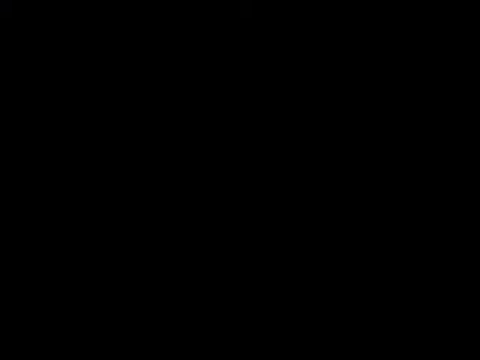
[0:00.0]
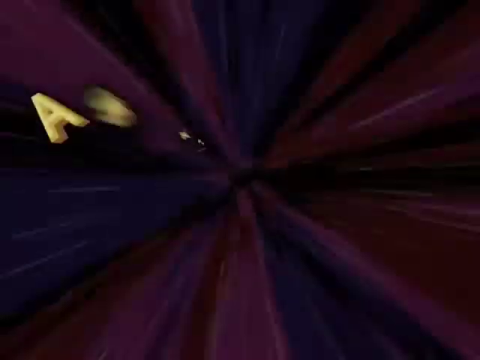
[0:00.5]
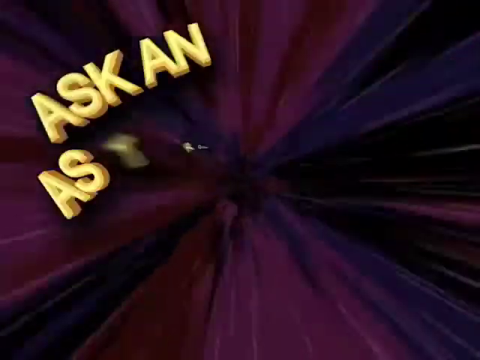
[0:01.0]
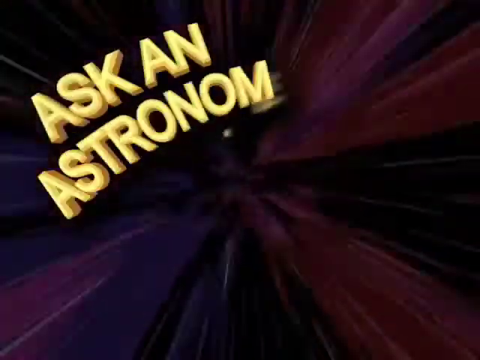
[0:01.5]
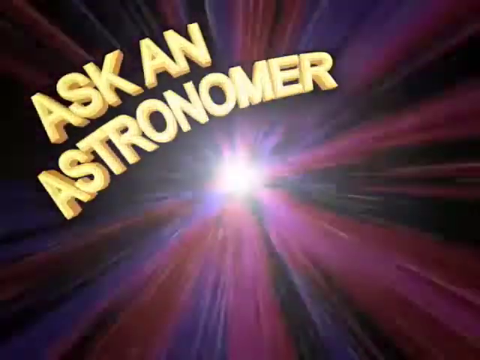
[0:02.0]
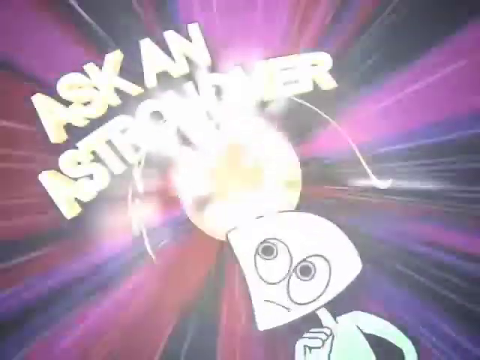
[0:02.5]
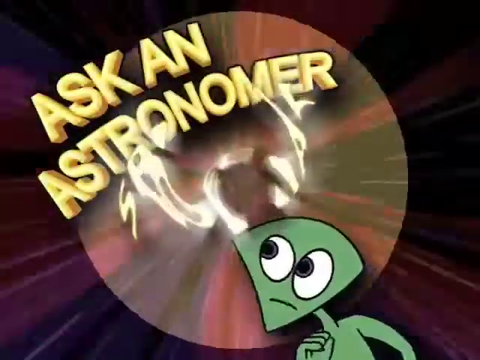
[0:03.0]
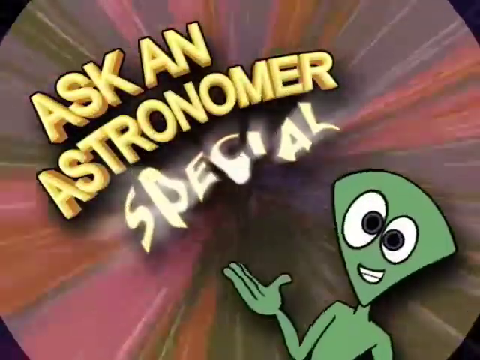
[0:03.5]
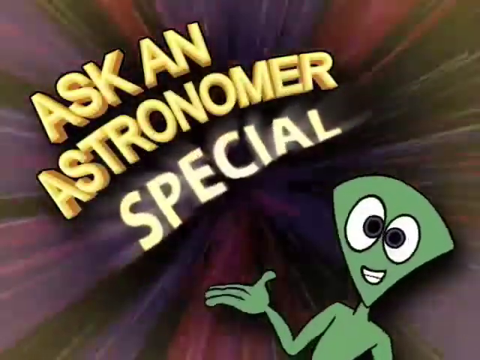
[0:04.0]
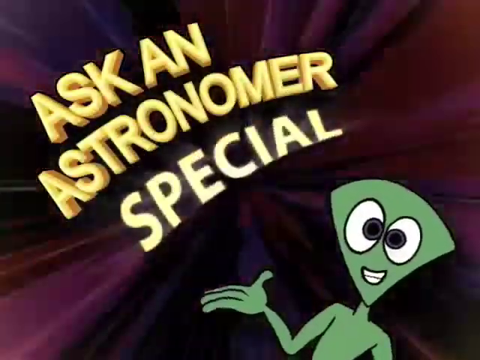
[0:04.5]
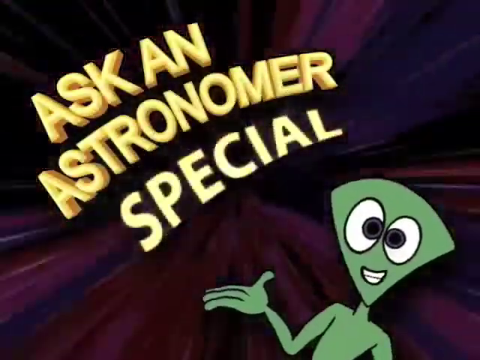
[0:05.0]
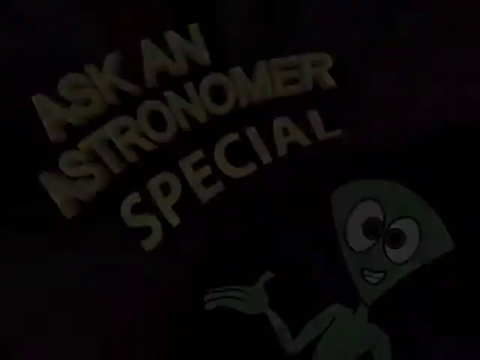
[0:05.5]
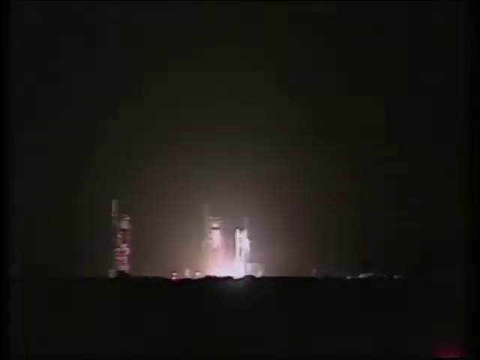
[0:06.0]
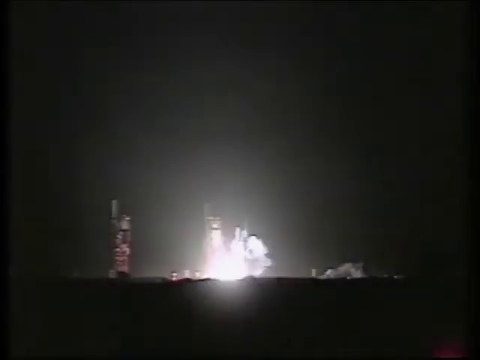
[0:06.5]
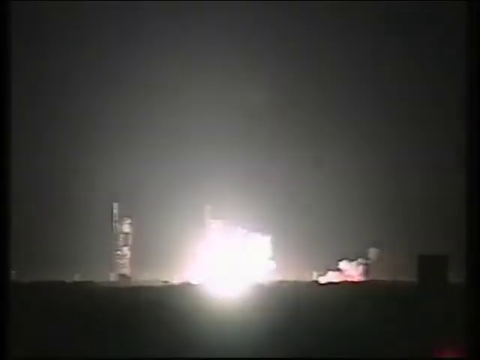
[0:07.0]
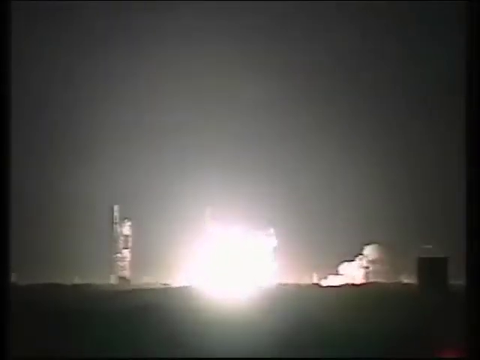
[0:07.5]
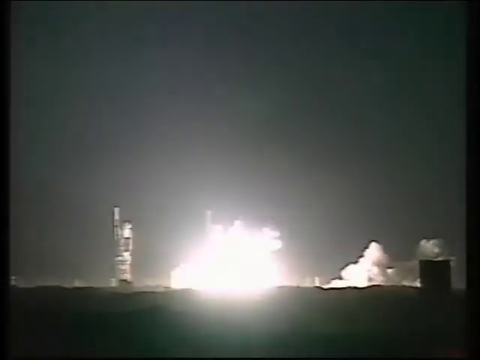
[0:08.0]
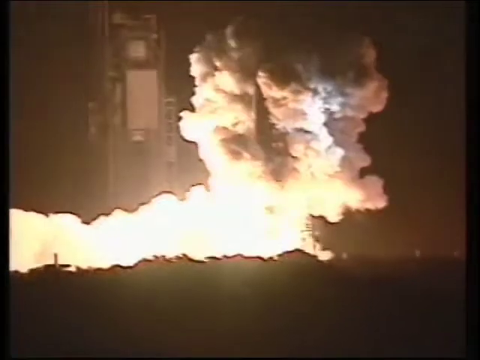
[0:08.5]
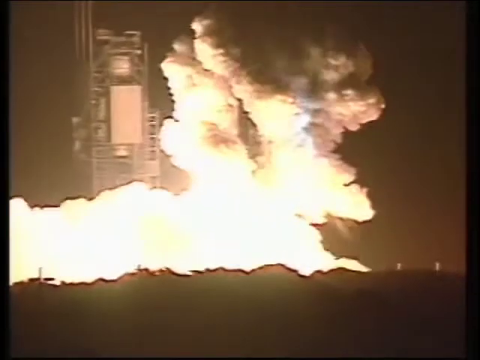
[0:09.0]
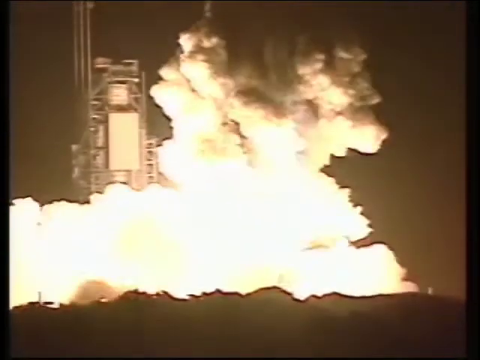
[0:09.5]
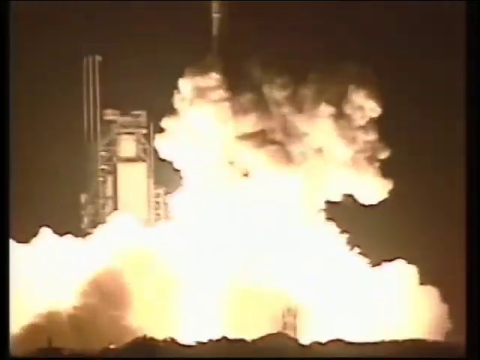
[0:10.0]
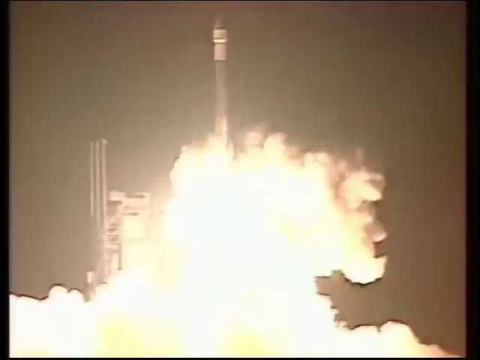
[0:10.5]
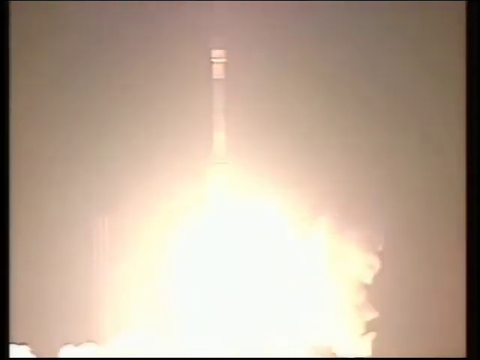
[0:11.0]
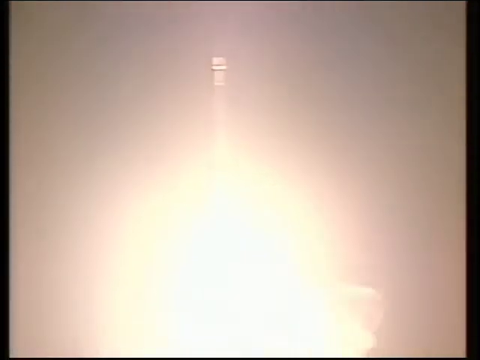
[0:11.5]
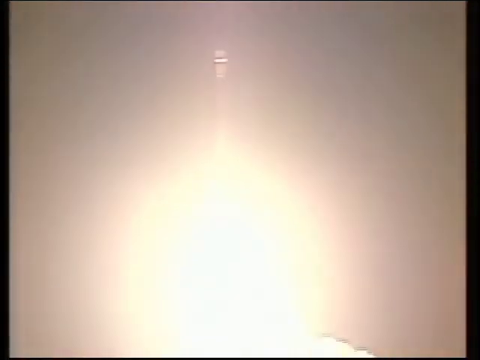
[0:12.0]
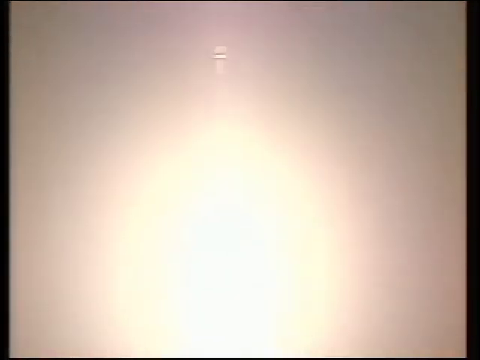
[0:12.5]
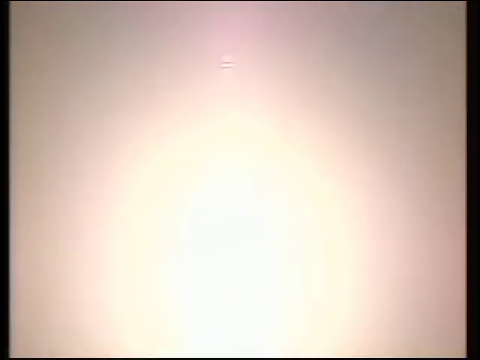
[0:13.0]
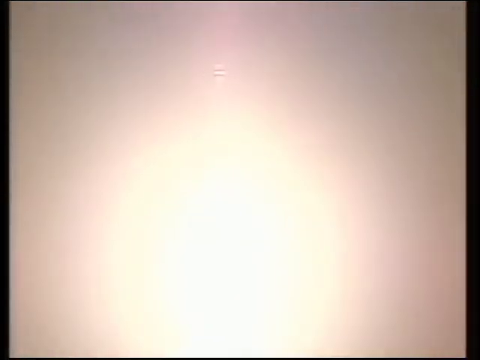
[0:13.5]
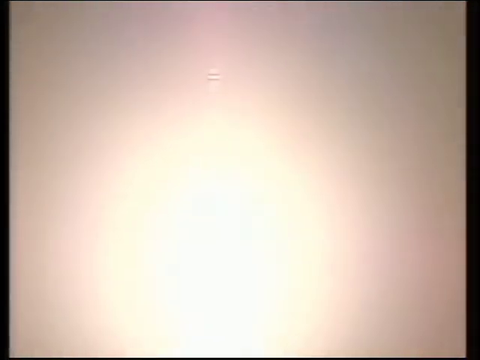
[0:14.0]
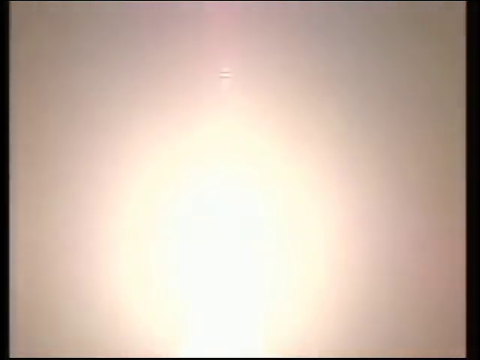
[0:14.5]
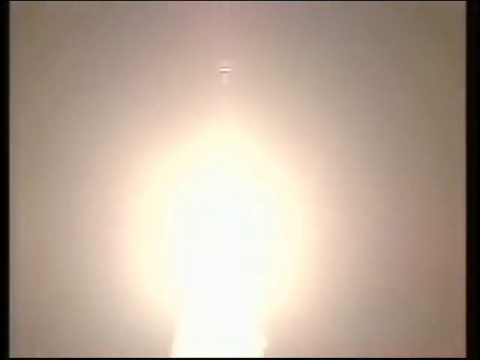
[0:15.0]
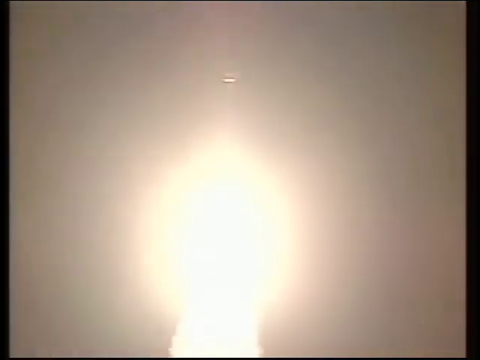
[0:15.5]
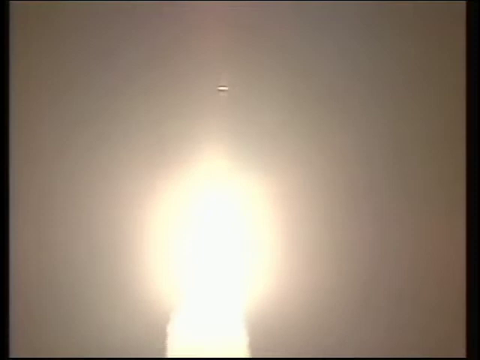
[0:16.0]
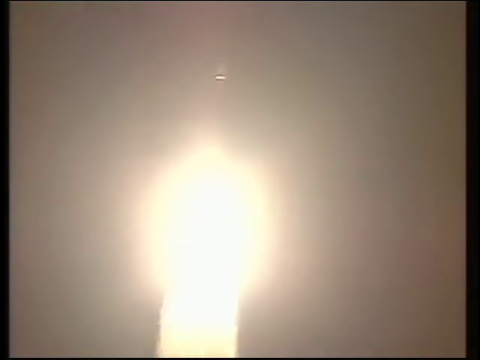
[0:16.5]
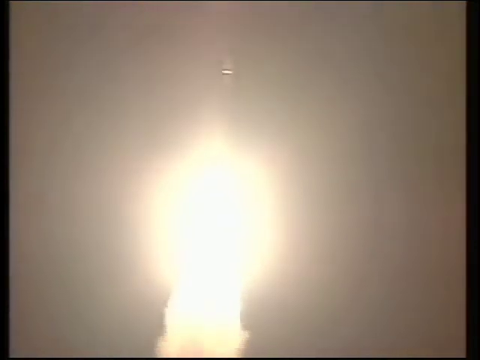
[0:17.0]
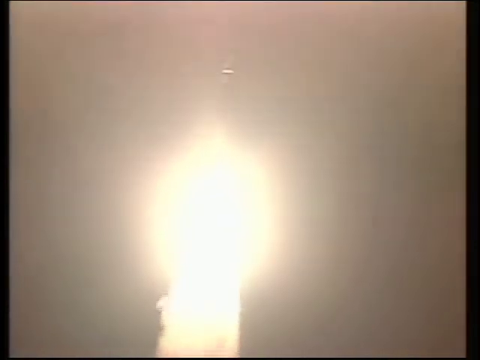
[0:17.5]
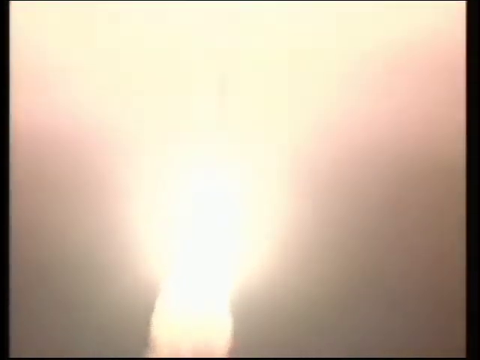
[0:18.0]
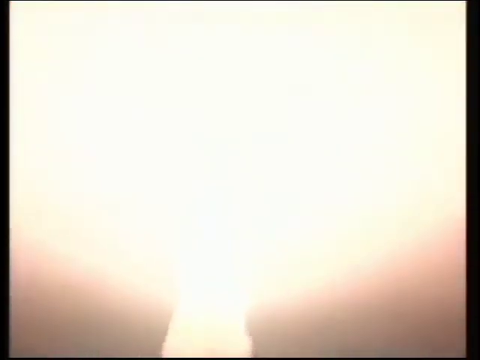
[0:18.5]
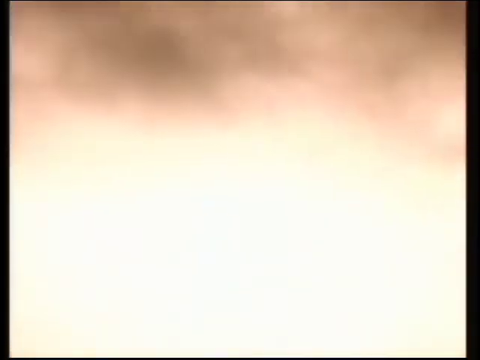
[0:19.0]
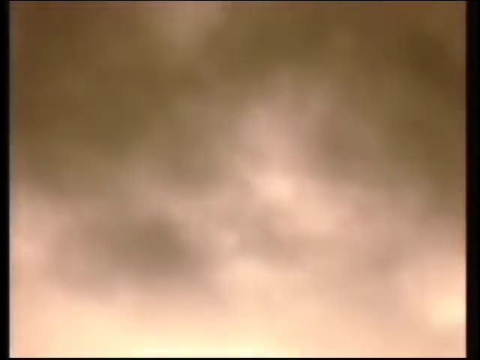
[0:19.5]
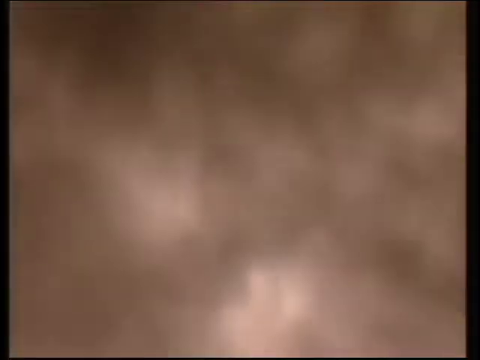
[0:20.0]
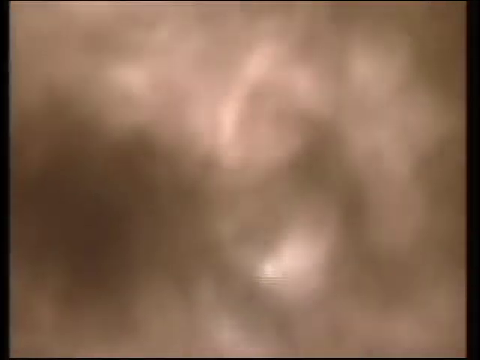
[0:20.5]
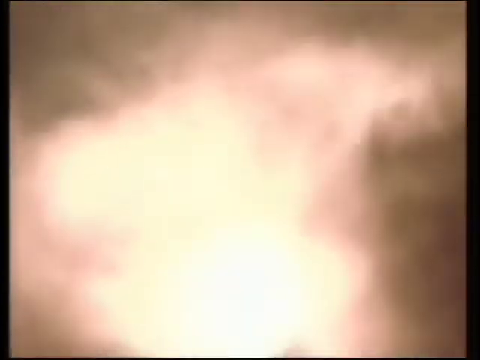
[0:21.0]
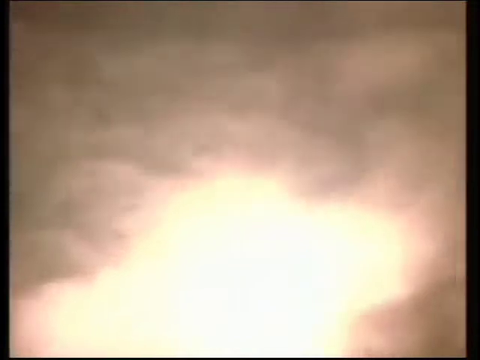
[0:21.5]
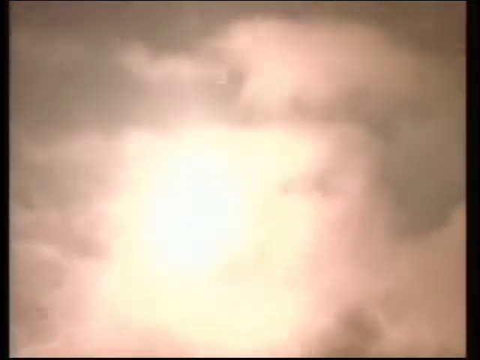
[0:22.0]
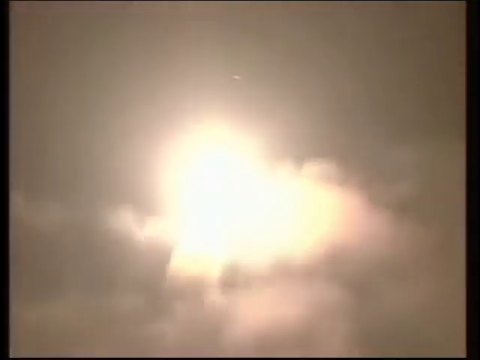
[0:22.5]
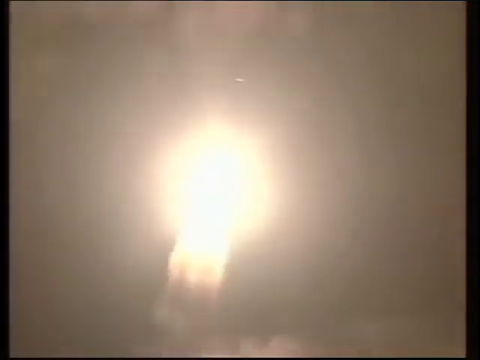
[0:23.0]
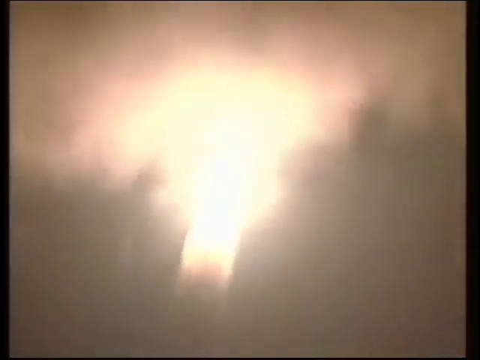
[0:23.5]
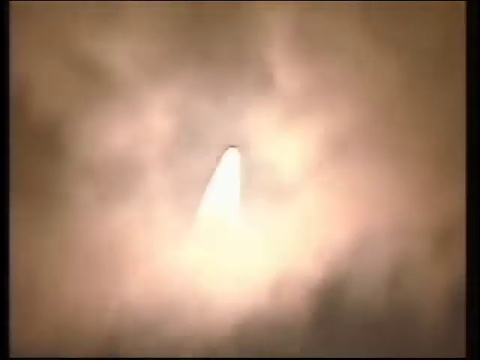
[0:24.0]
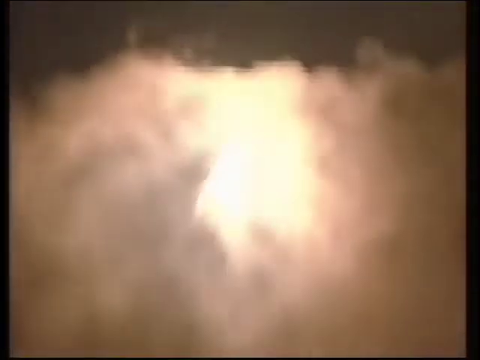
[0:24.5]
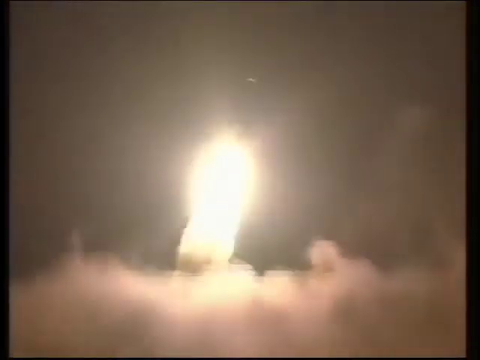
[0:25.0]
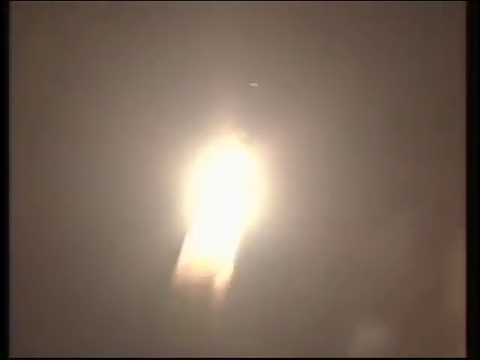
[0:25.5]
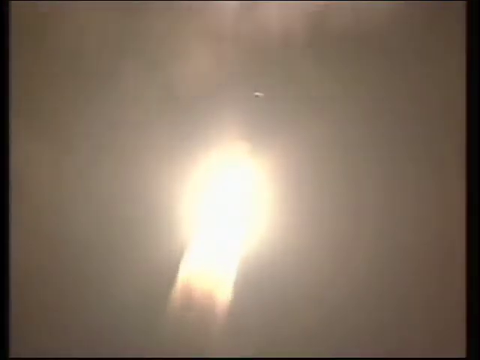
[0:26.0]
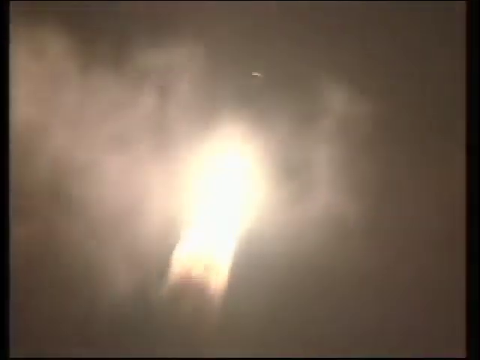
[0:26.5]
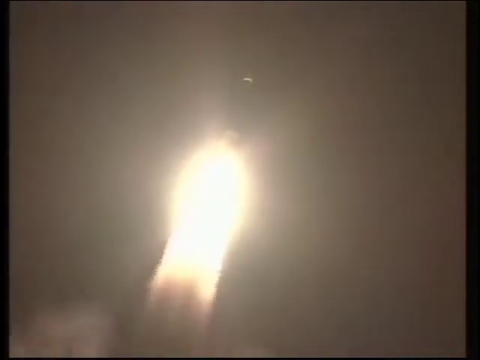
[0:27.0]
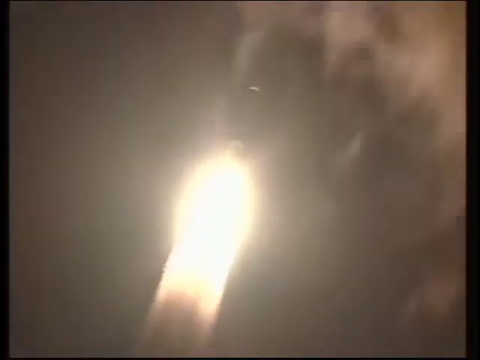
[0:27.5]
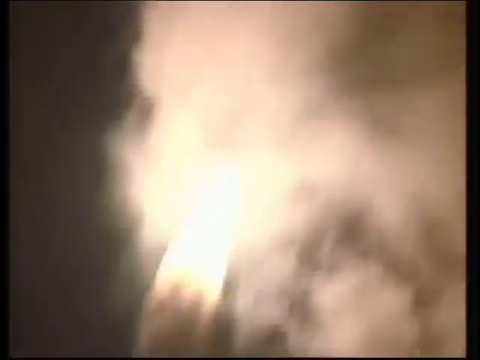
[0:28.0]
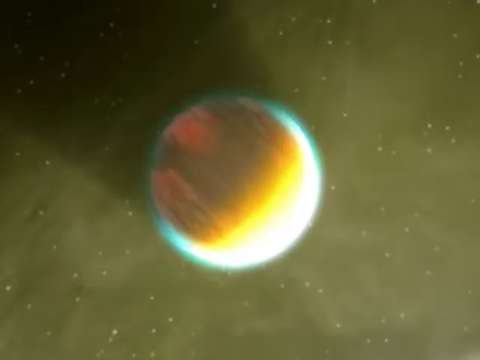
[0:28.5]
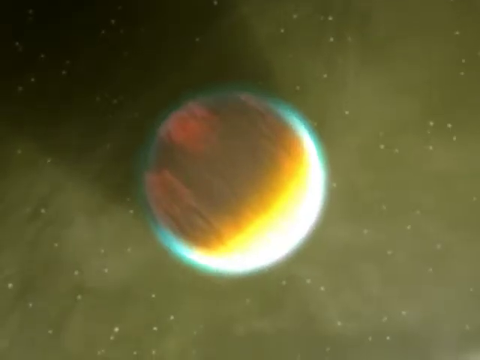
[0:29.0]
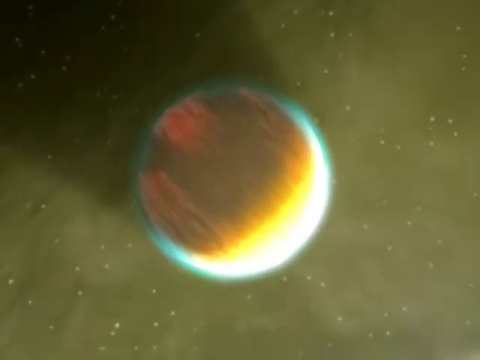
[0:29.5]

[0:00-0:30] A rocket launcher, a space shuttle, starts up and launches from the landing ground. It increases power and within seconds reaches a high speed.